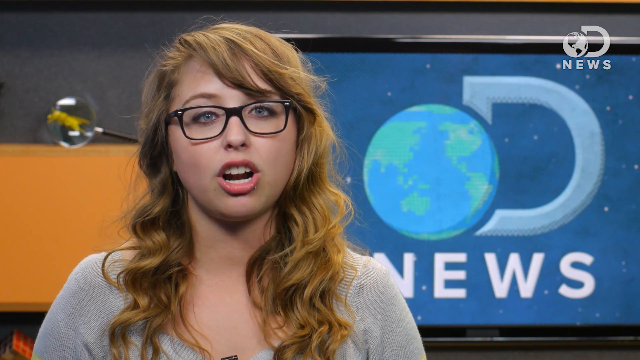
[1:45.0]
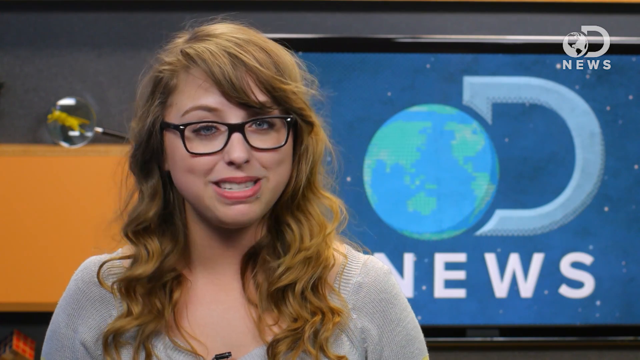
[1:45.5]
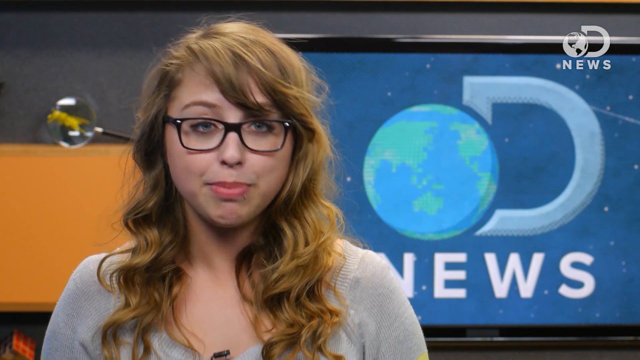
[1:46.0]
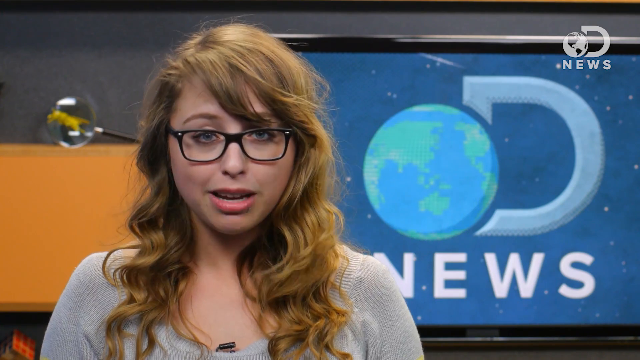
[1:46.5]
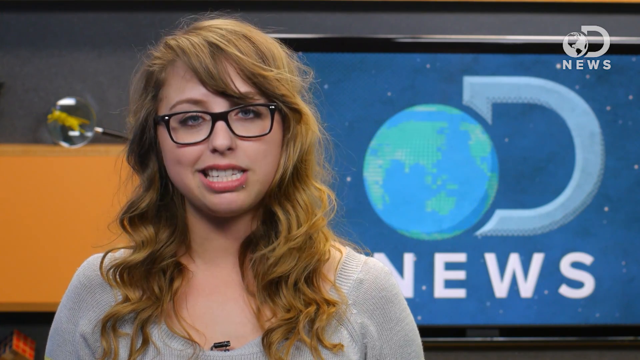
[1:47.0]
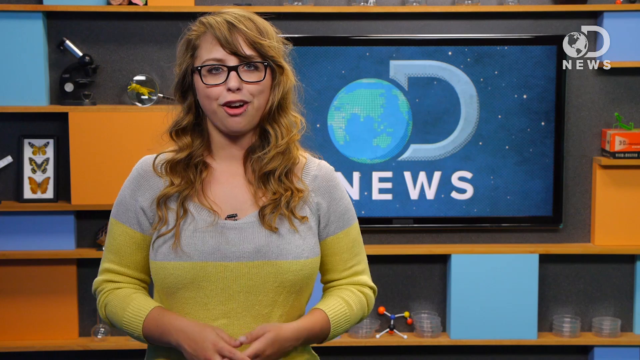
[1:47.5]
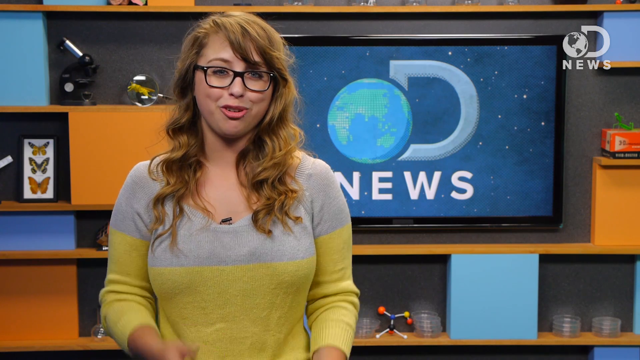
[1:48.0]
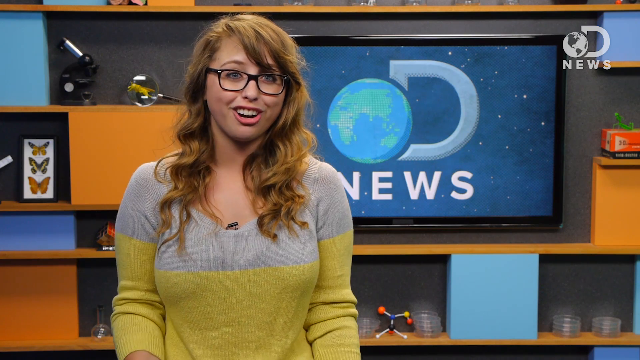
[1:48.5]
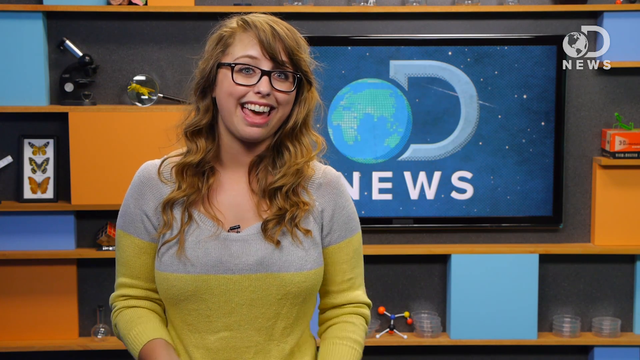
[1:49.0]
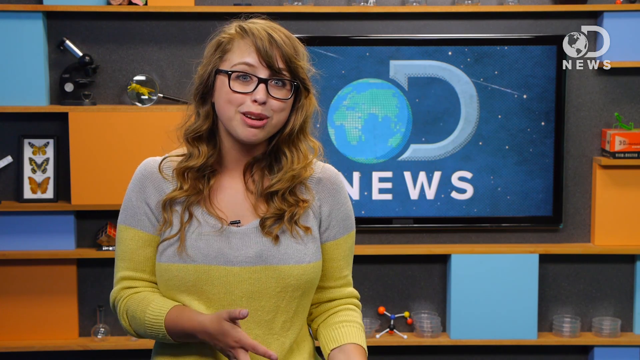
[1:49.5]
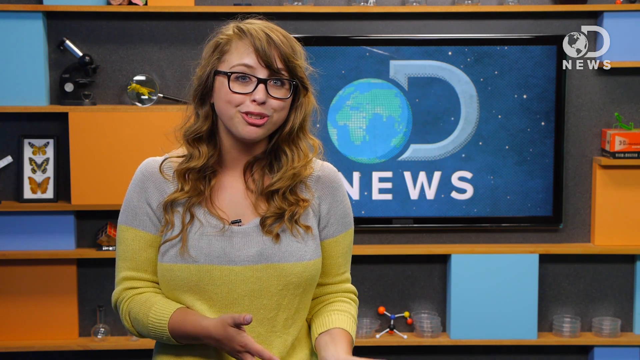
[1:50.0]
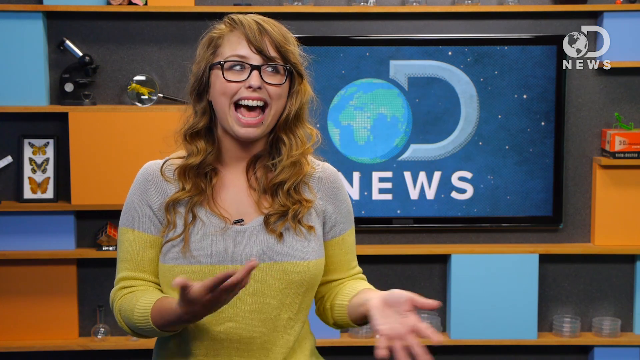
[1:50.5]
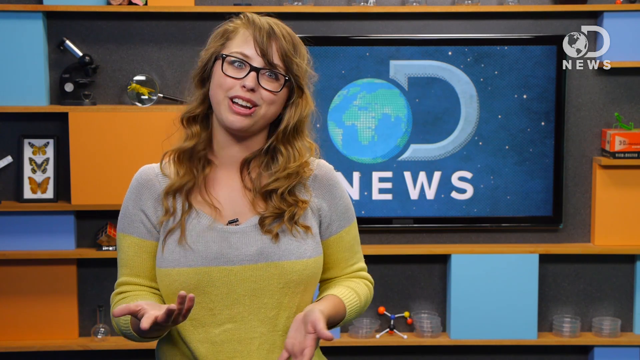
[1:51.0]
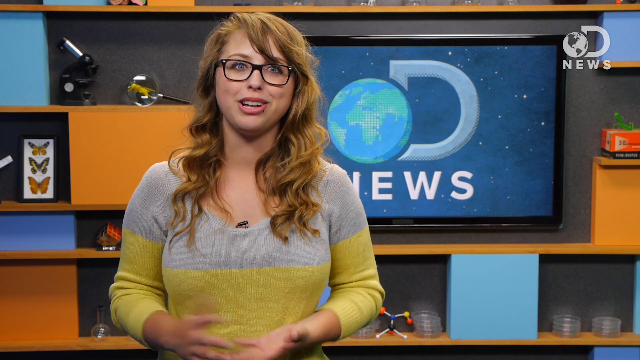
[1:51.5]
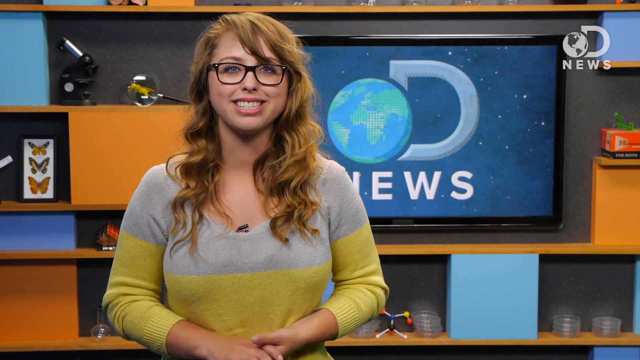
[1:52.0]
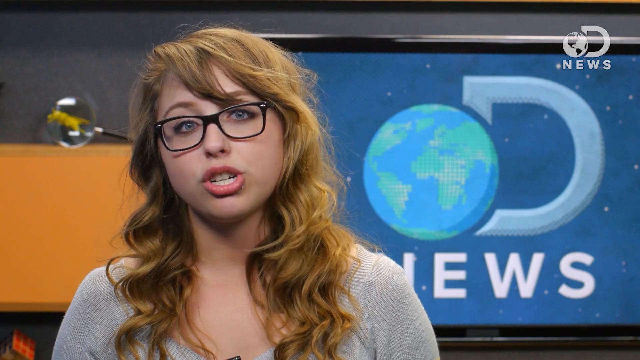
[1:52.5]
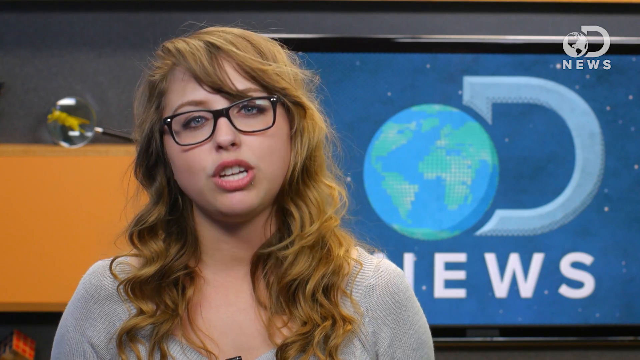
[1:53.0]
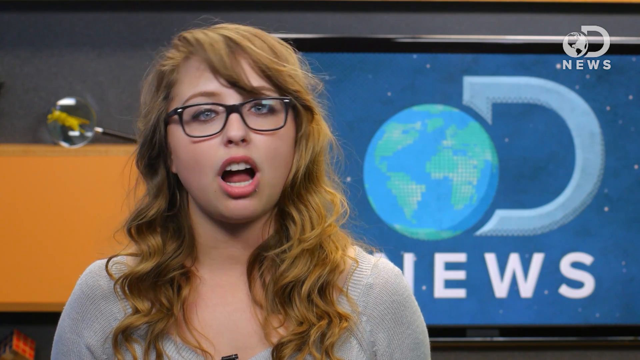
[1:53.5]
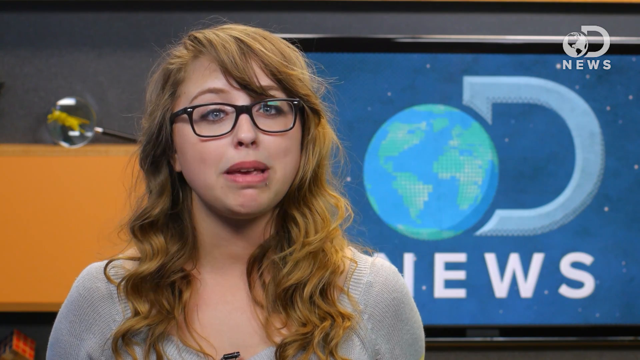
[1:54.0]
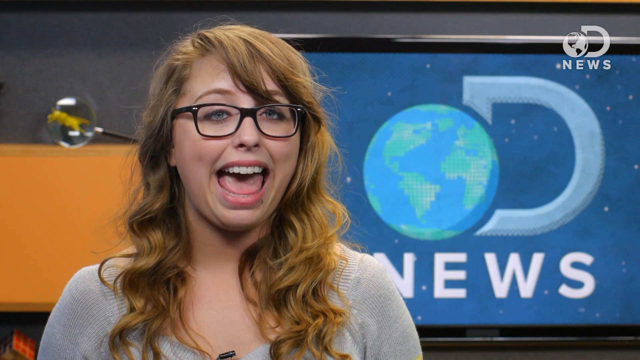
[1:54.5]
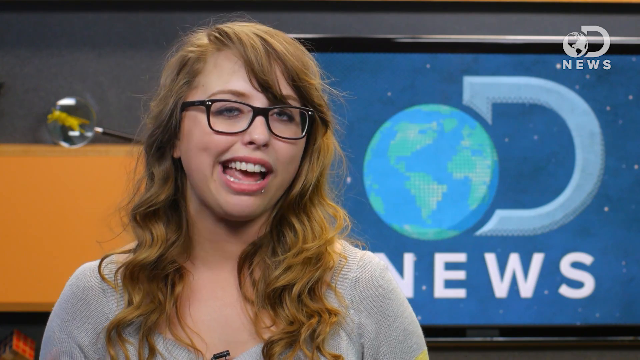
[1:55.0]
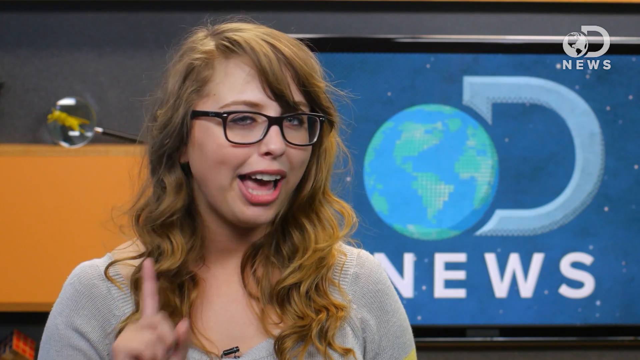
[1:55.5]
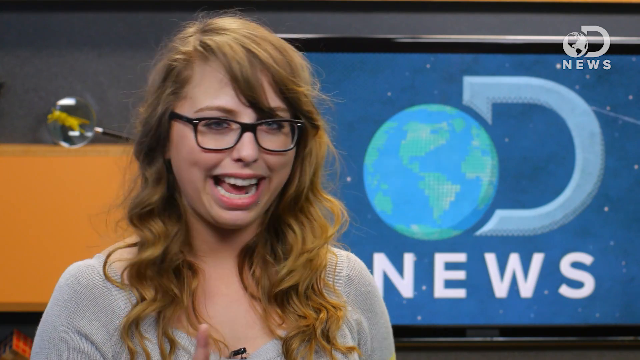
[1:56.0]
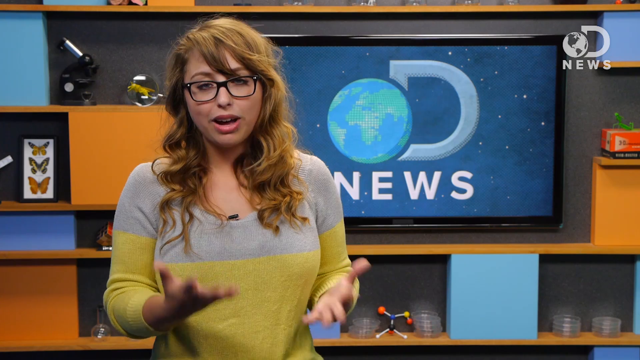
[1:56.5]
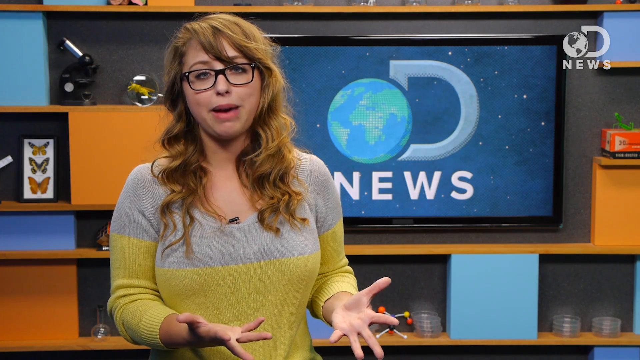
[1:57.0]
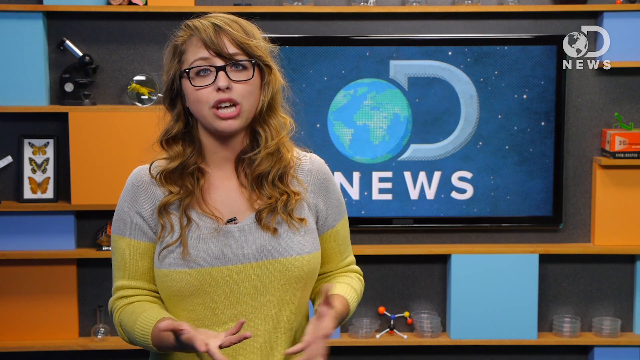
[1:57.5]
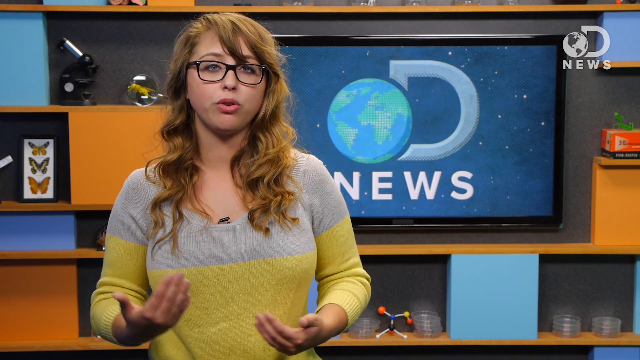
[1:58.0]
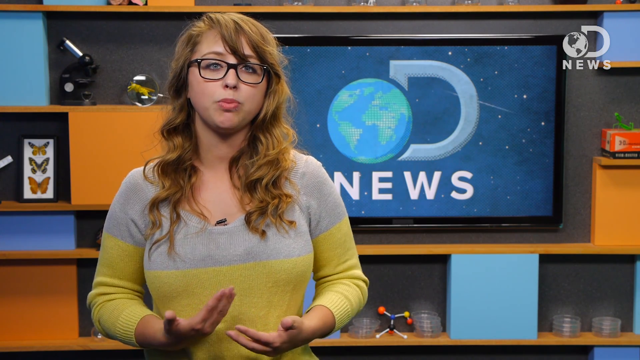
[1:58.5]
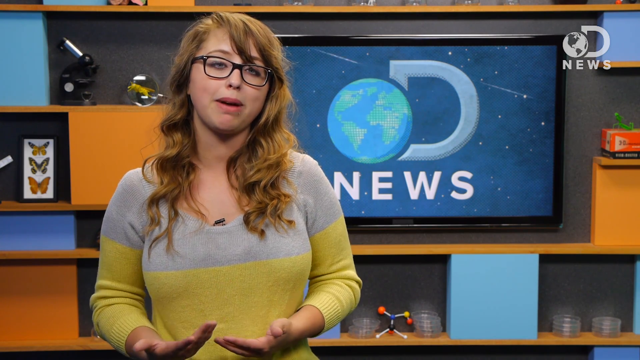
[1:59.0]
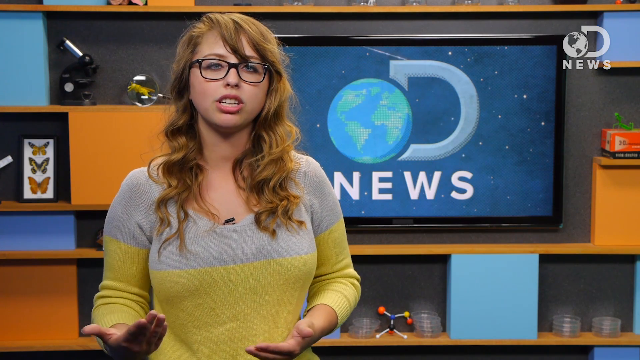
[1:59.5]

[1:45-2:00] Lori, the scientist, continues talking to the audience, using her eyes, mouth and fingers expressively, pointing and gesturing with her hands. She looks to be a scientific news reporter. Her surroundings look to be a classroom with a microscope, a butterfly case and a plastic DNA model. The logo in the background is on a television and reads "OD," with the O as a rotating earth and "news" under the D. The classroom is brightly colored in light blues and wooden browns.